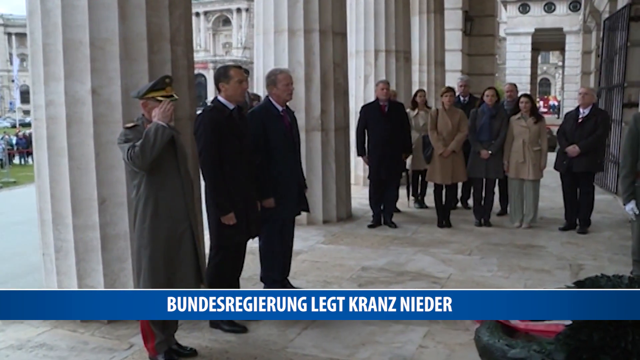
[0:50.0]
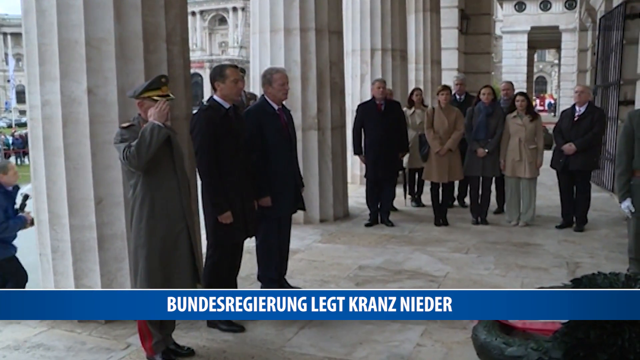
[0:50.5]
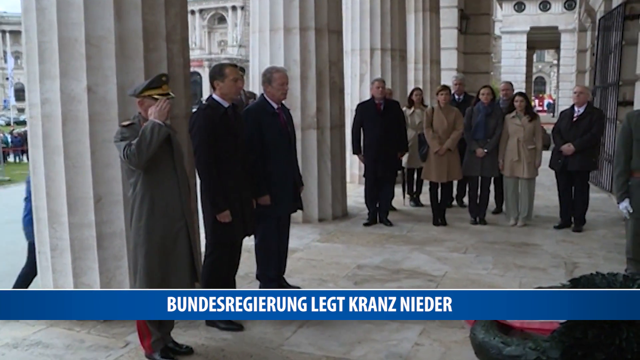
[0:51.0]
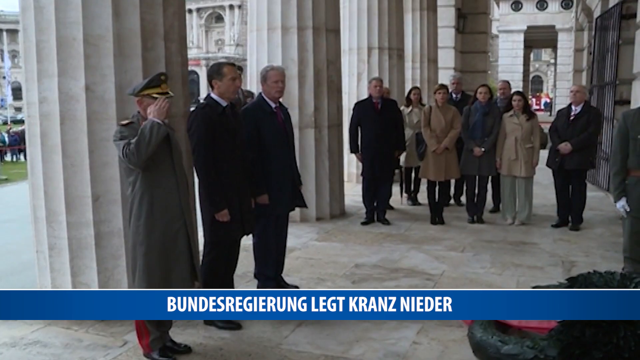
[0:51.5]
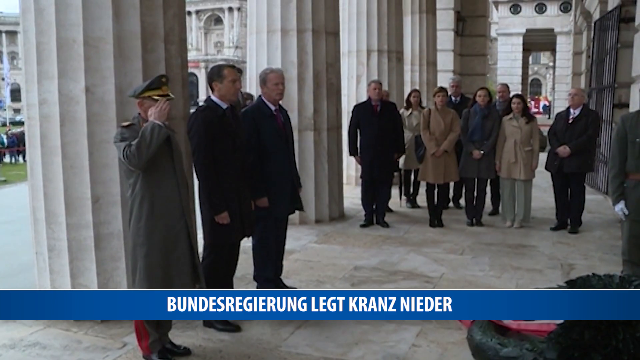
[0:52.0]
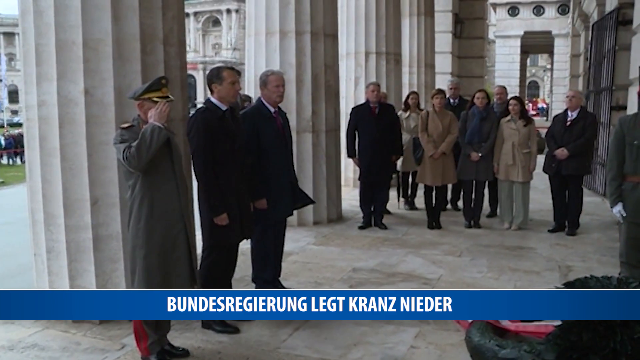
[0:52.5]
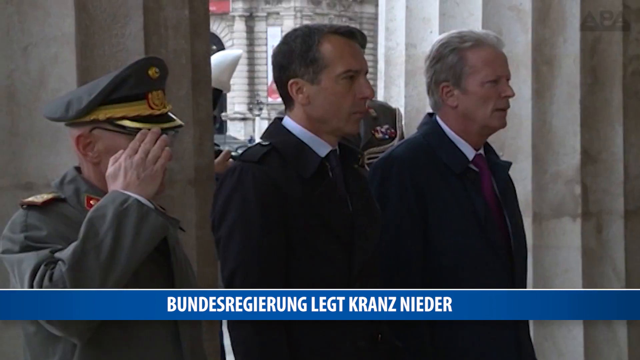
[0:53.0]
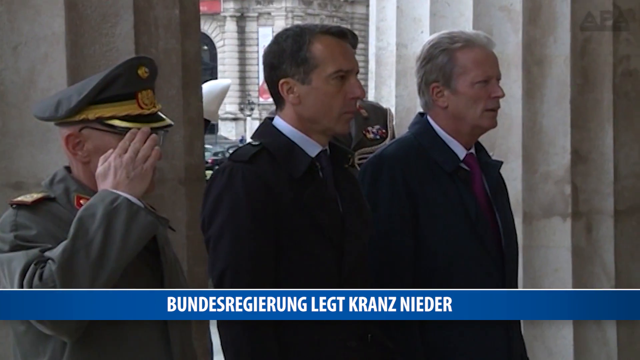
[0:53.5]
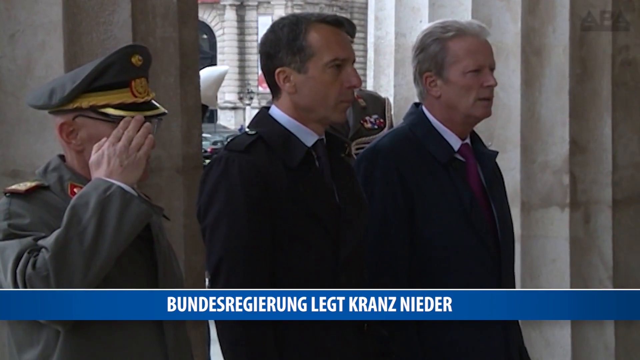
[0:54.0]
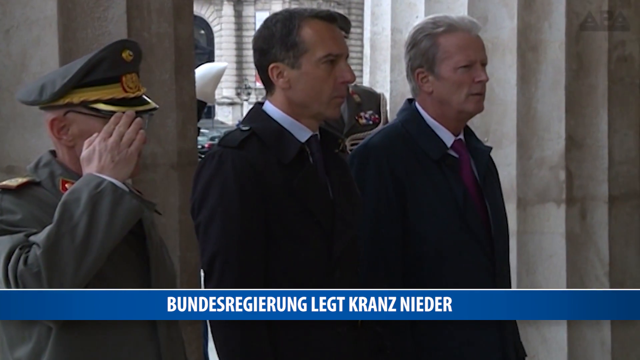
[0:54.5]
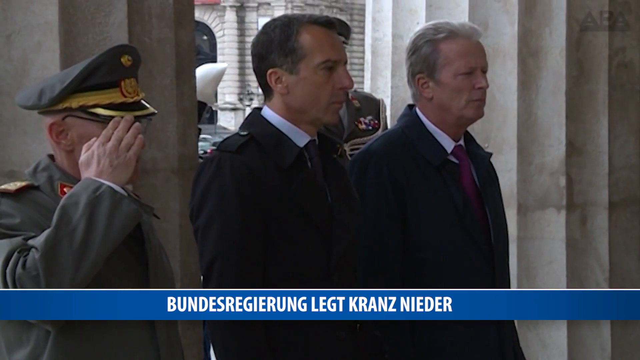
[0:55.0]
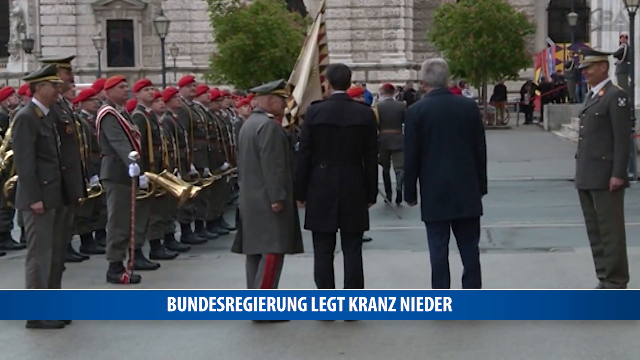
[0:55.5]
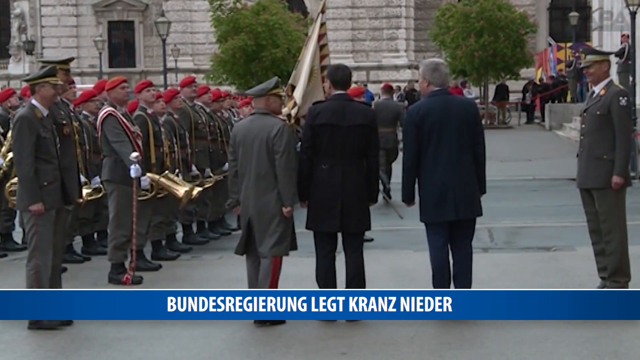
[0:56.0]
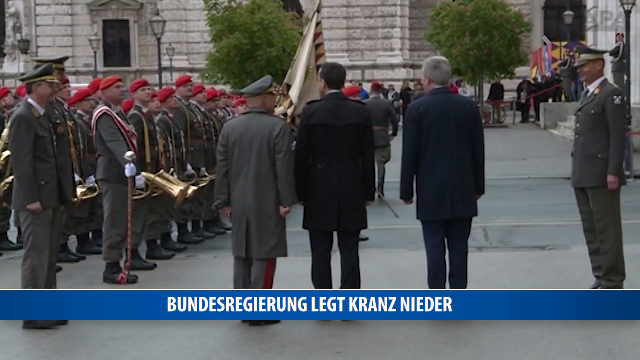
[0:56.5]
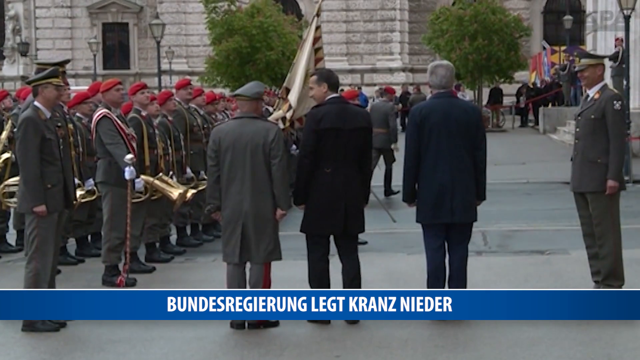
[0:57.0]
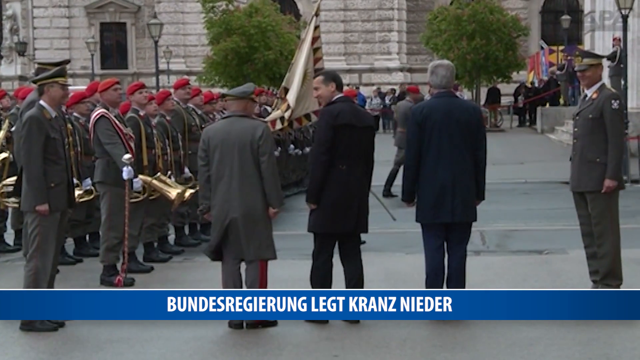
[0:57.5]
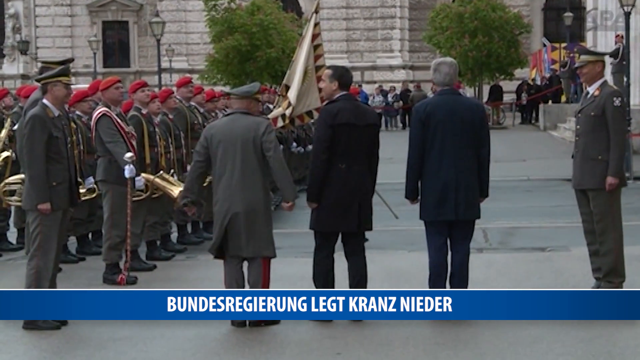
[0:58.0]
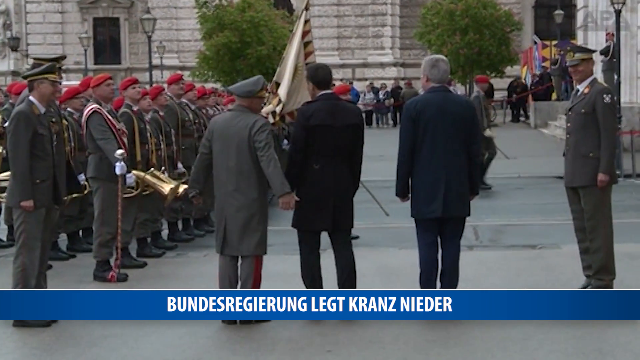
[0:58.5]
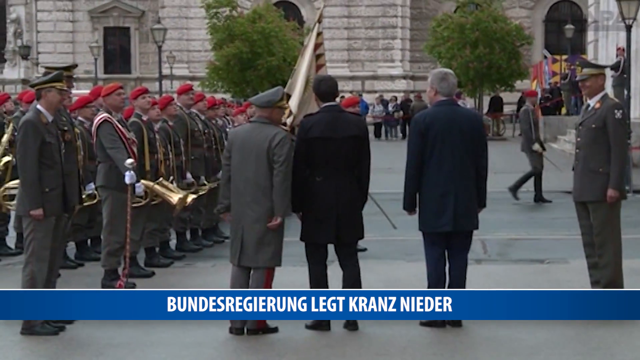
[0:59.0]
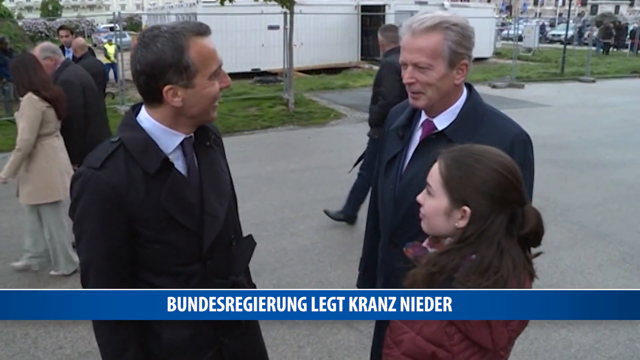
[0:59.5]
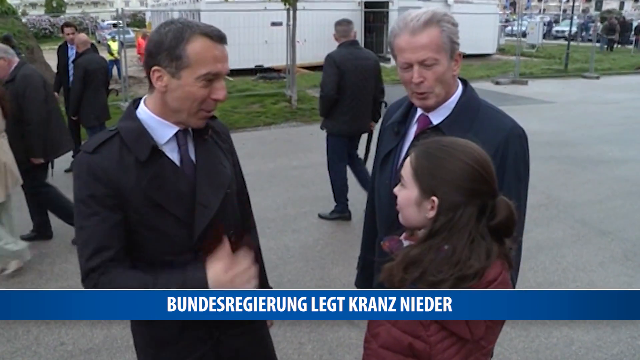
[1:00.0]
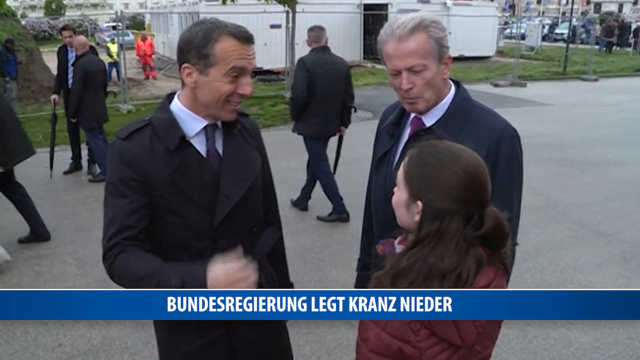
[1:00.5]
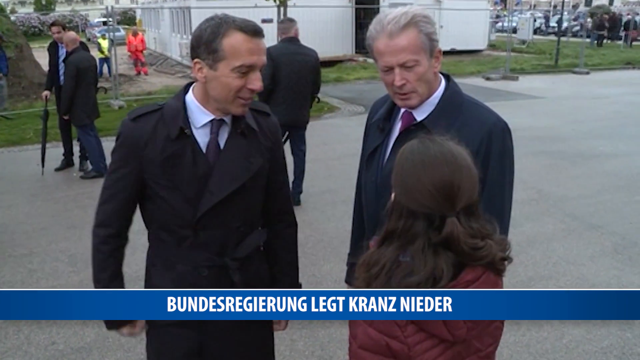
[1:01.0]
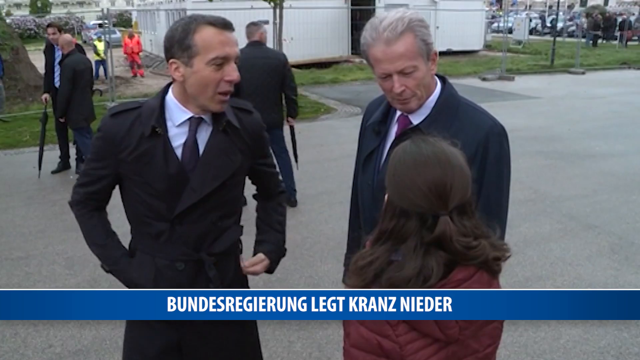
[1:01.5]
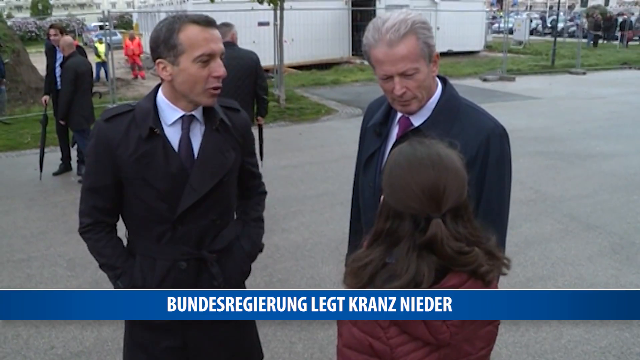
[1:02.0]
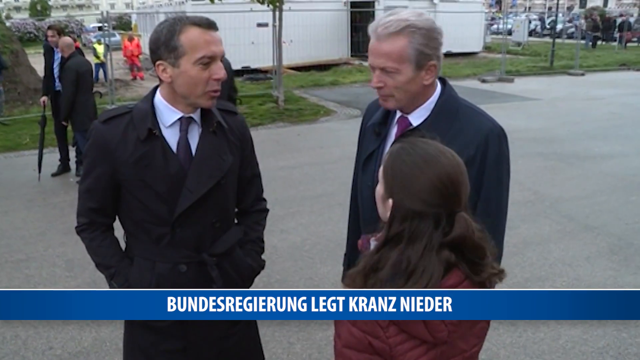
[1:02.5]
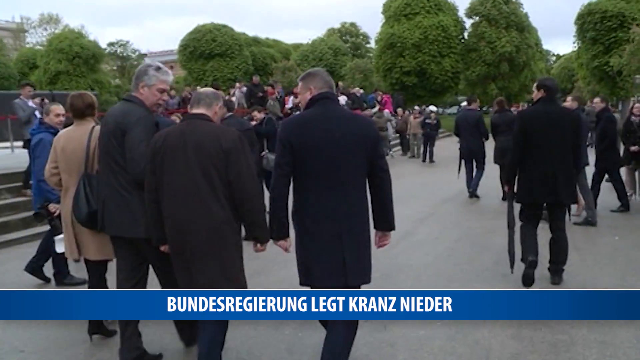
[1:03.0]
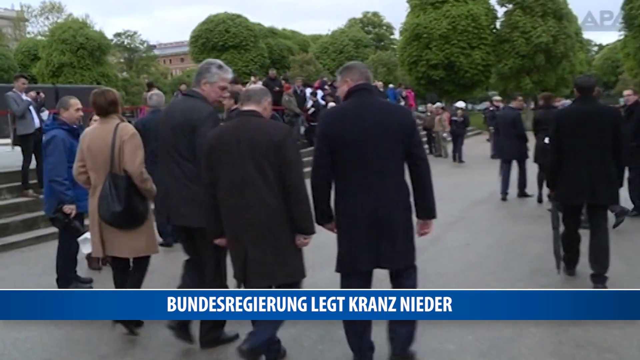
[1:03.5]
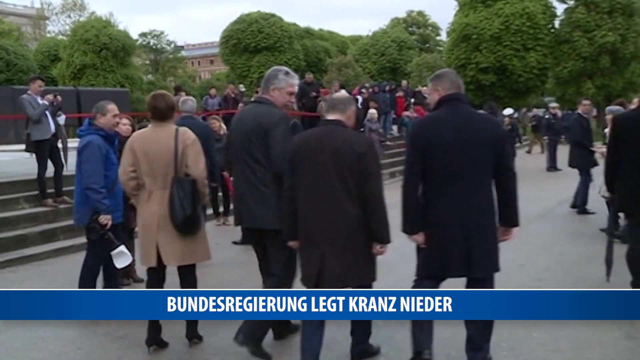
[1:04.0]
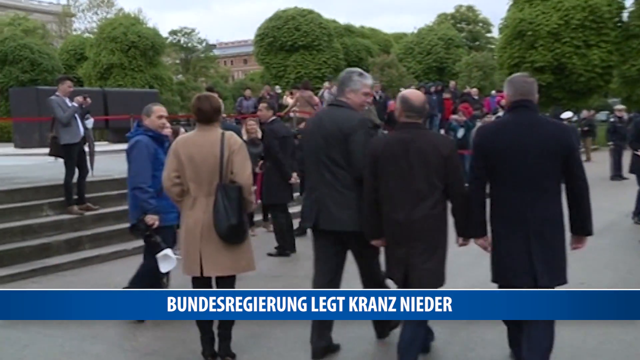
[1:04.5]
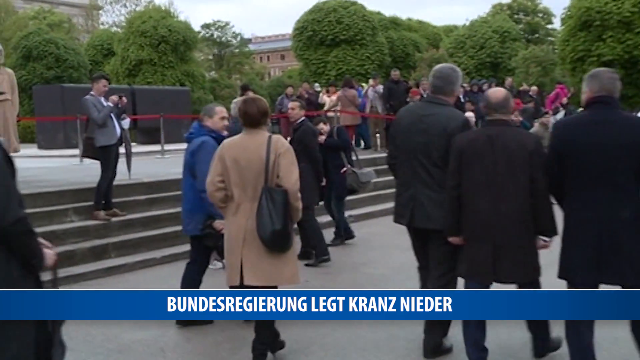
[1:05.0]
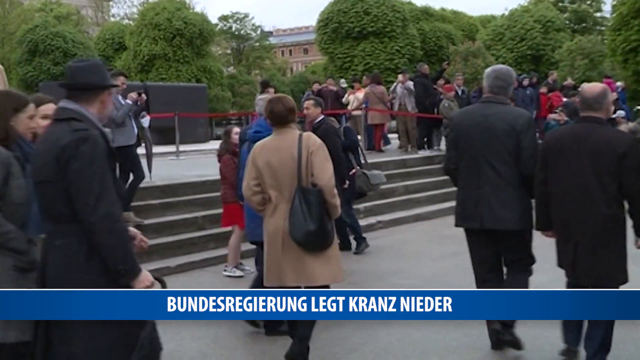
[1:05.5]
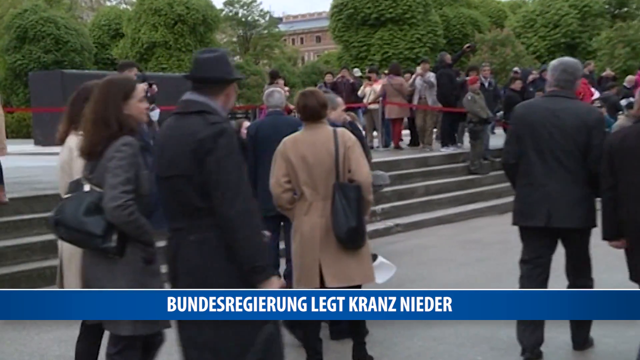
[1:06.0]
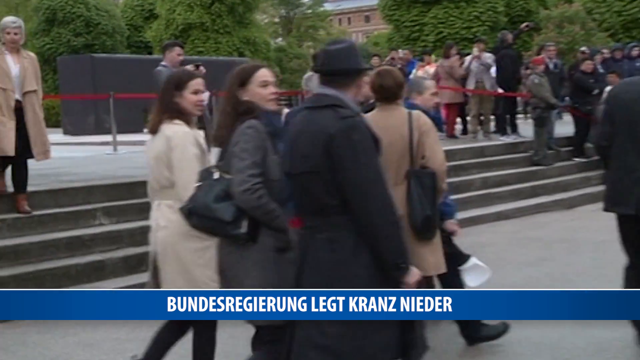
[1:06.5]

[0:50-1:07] The leaders take photos, then put up a red and white ribbon. Three soldiers stand still, saluting, during the signing of papers, and everyone stands still. Soldiers salute and escort the leader. Everyone walks back, while cameramen stand taking photos. People take photos and walk away, talking to each other as they go.